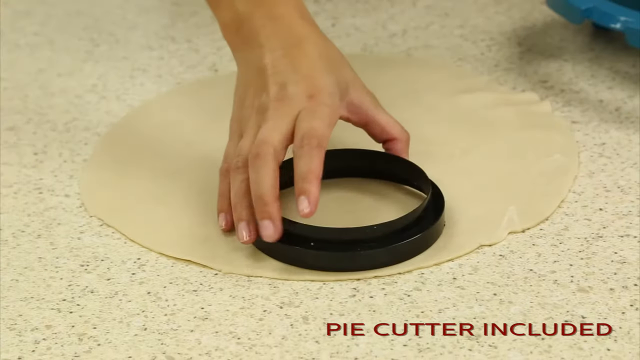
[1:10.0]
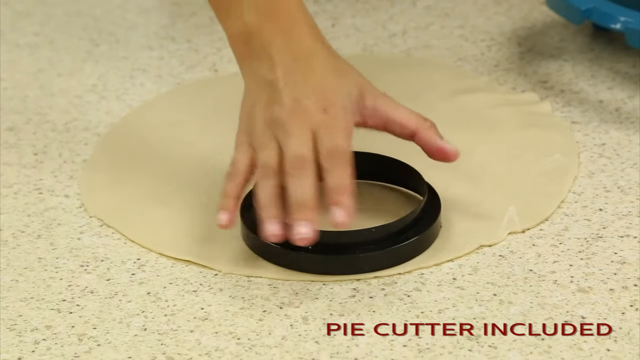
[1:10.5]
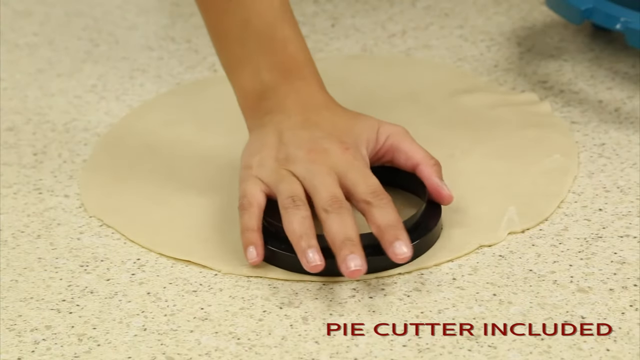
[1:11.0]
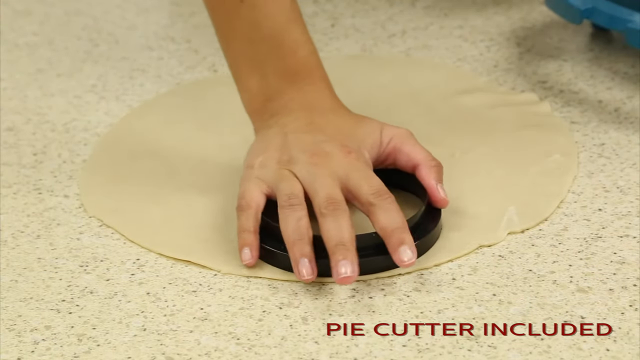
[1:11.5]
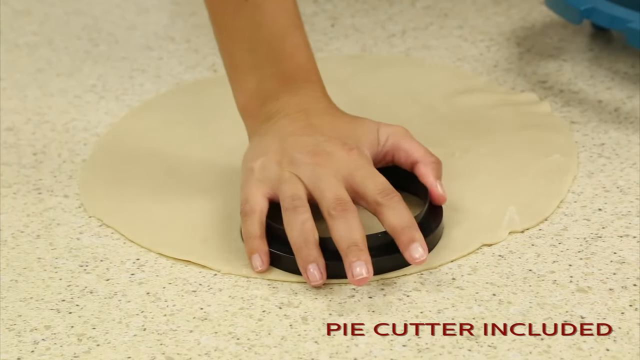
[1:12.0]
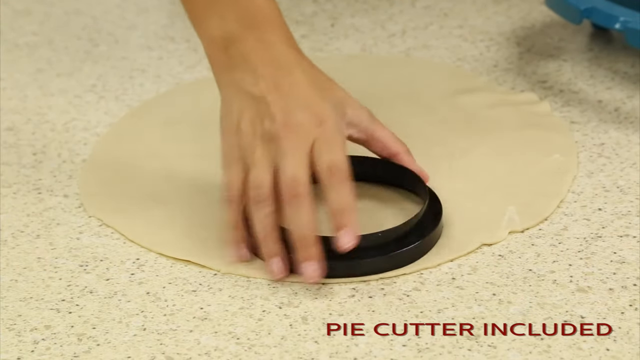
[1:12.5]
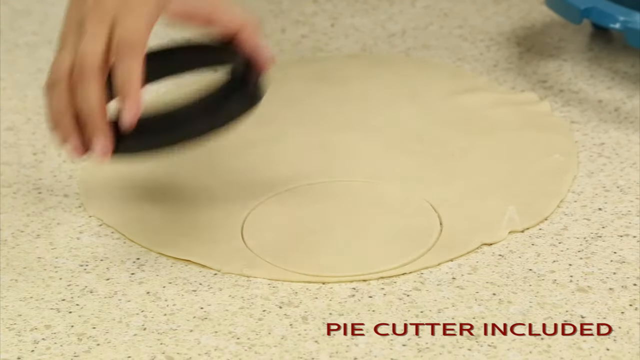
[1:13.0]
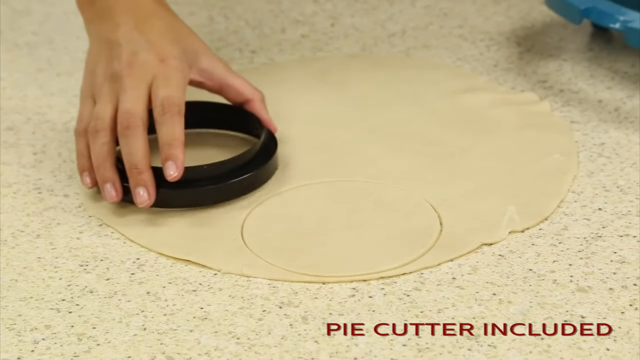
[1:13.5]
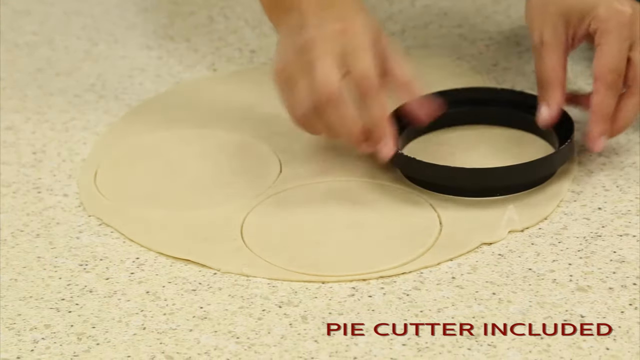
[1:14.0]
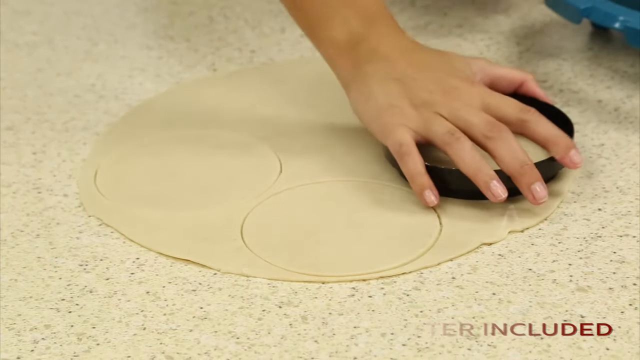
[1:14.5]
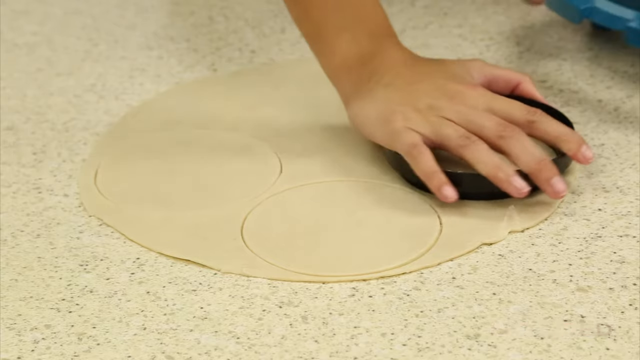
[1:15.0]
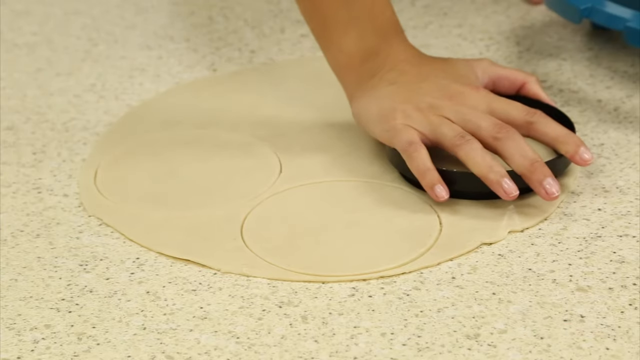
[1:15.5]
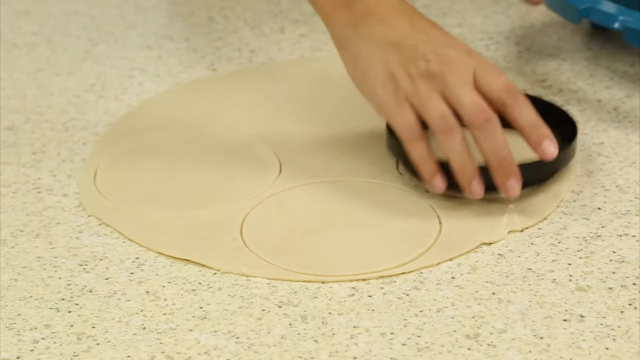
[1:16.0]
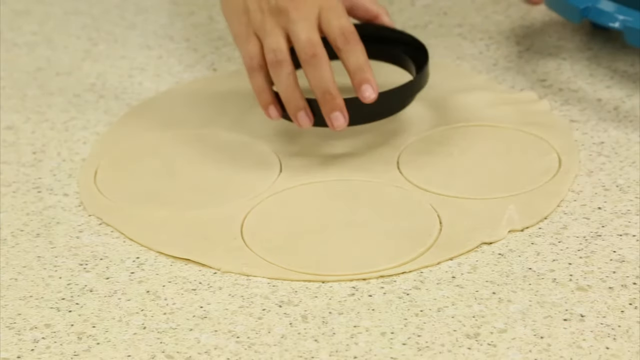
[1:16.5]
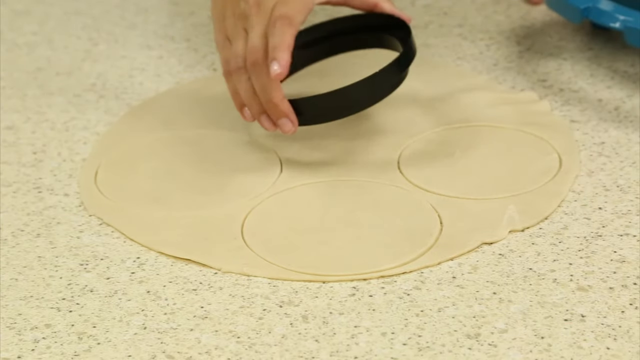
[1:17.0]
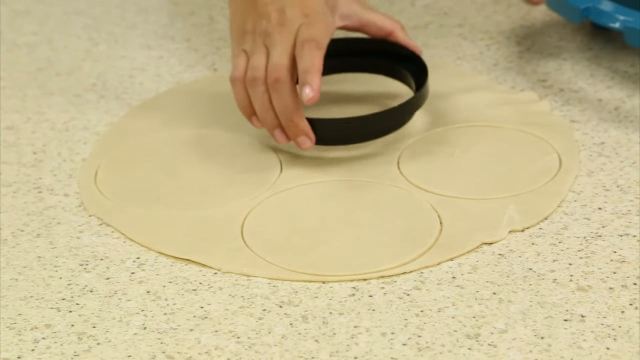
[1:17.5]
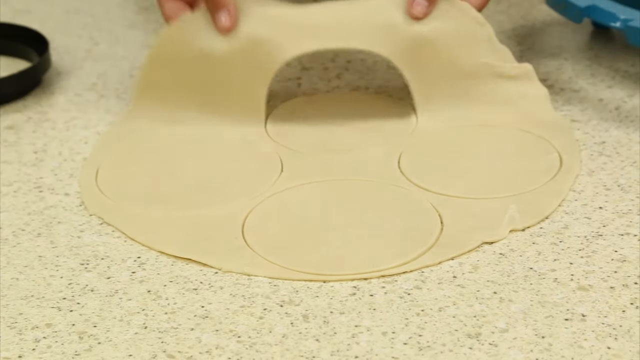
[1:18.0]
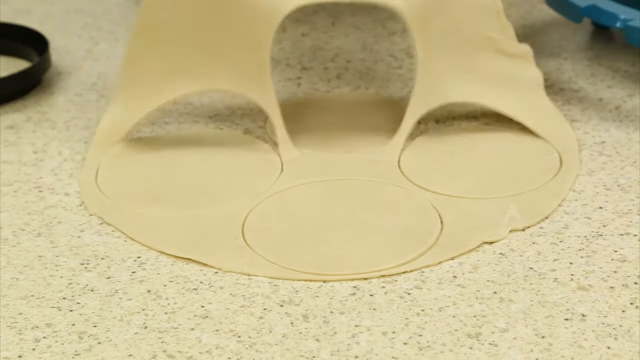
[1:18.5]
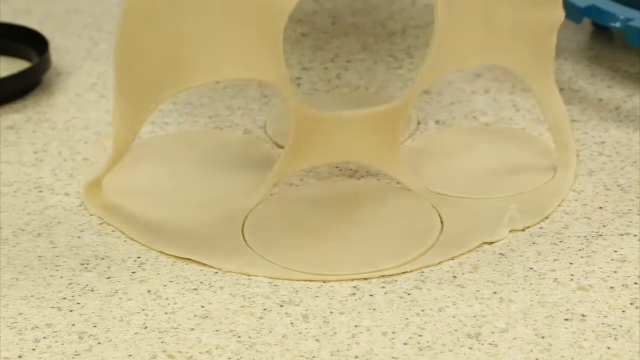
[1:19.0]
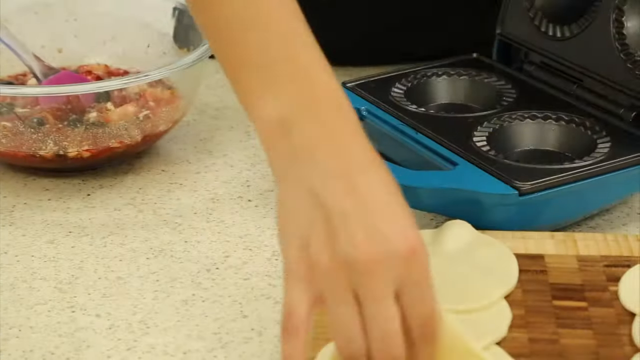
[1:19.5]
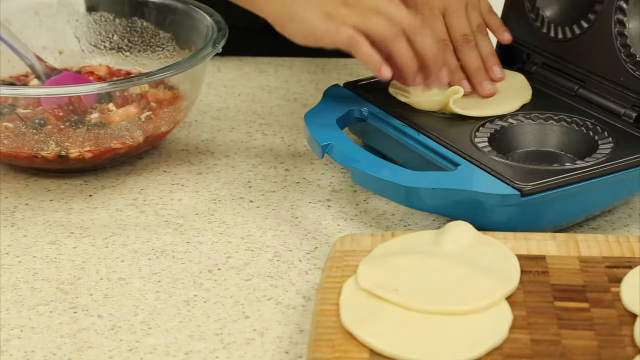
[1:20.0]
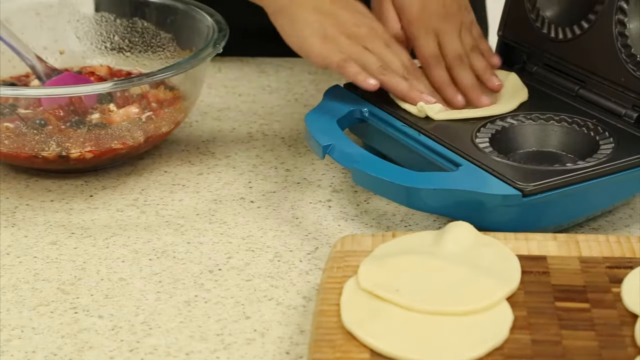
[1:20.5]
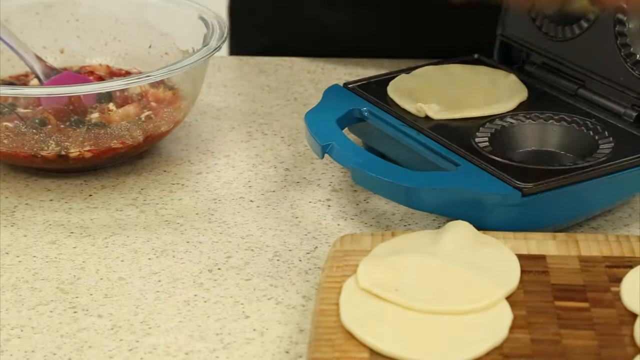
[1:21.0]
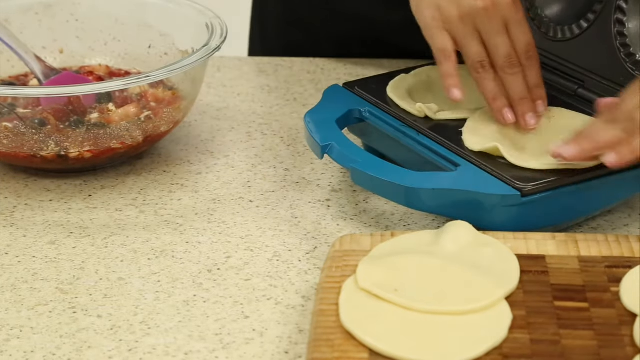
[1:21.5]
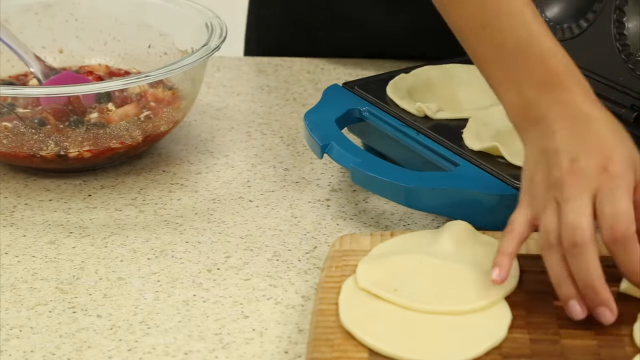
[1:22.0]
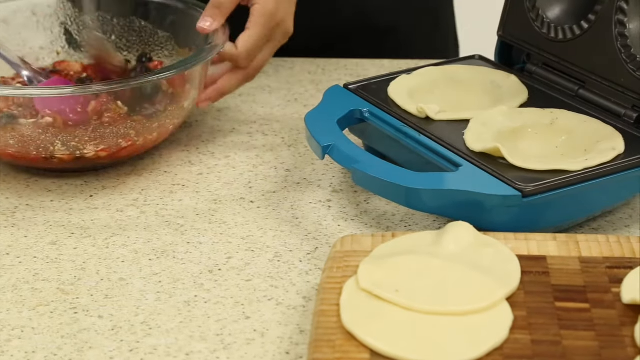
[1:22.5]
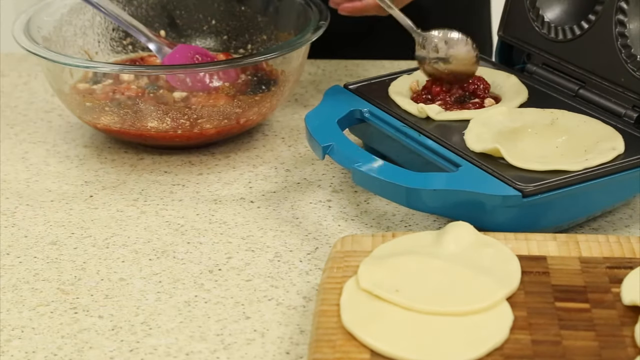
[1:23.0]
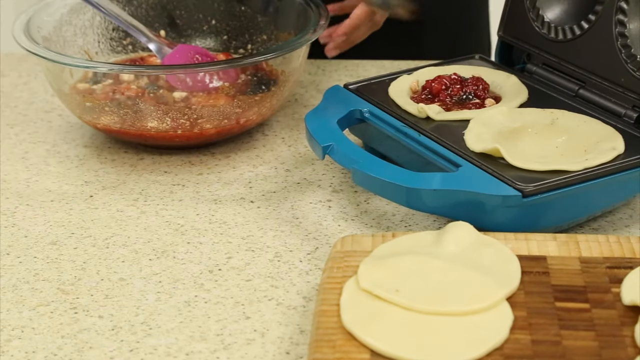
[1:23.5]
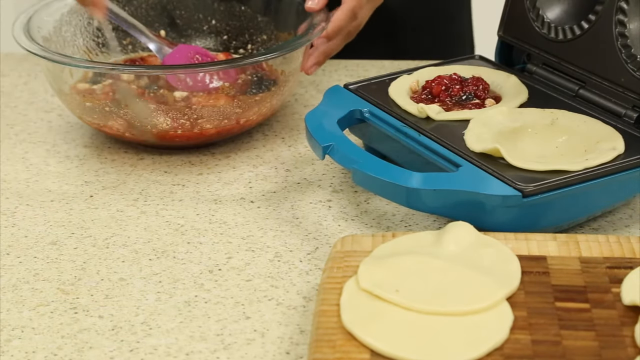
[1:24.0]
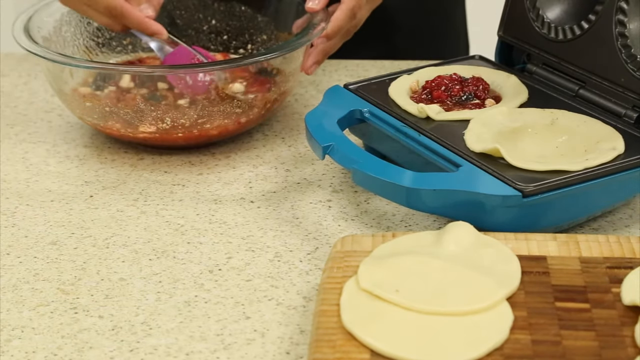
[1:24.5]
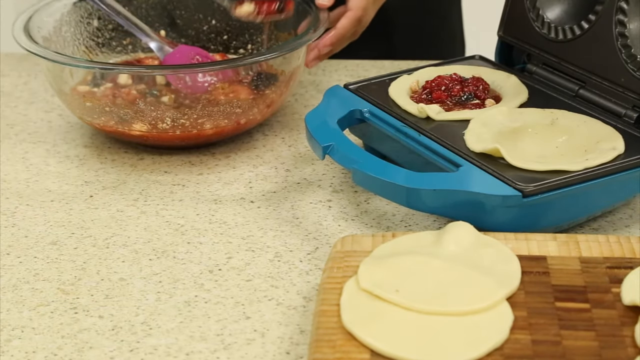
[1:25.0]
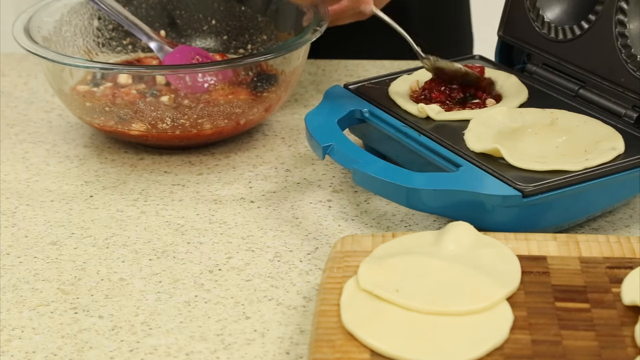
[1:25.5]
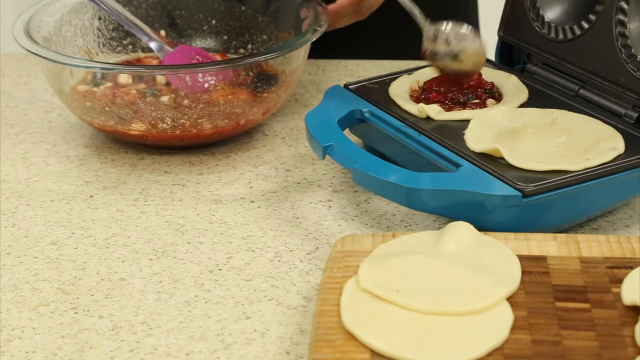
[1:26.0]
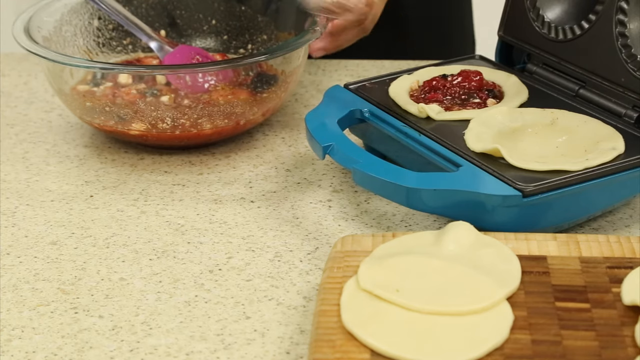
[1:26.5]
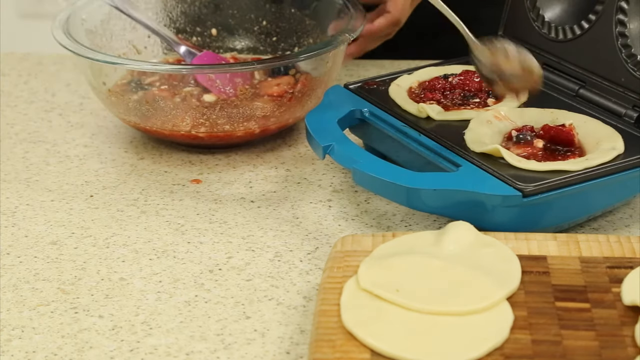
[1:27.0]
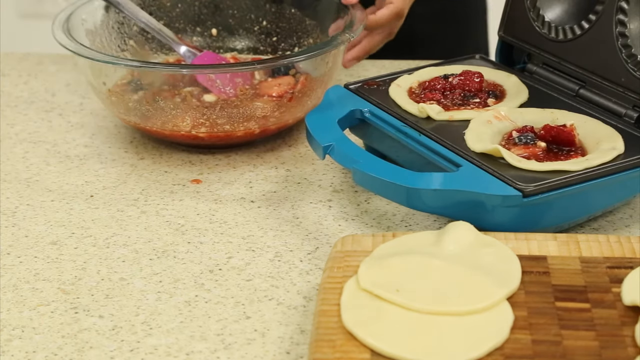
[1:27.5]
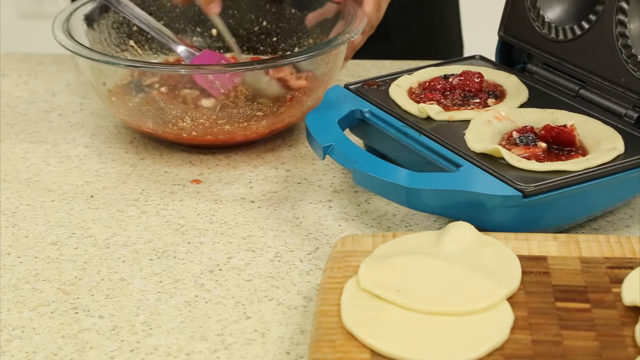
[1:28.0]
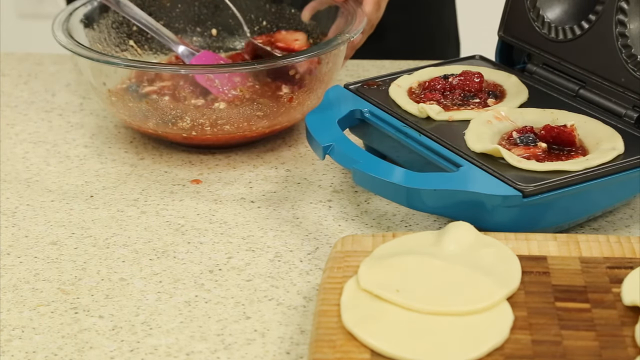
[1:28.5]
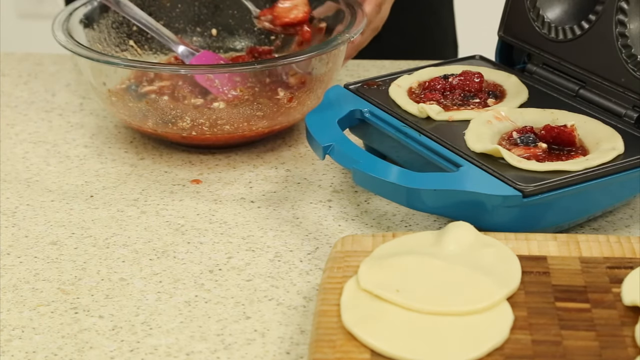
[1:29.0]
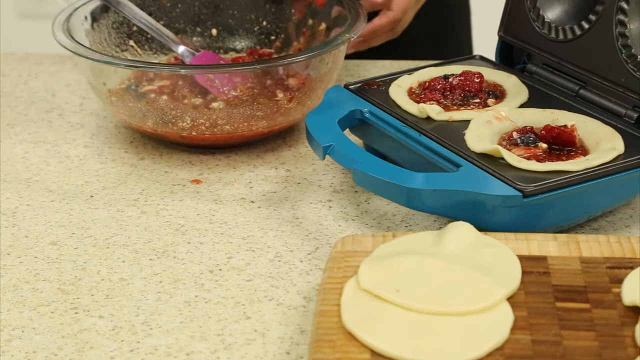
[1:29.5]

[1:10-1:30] The man uses a pie cutter to cut through what looks like a piece of dough or a tortilla. He places the round dough into a toaster-like machine that, from its shape, looks like a pie-making machine; when it opens, there are holes inside to hold the pie. The mixture from the bowl is put onto a piece of dough, another piece of dough is placed on top to seal the contents inside, and the toaster is closed and switched on to cook the dough and the filling.